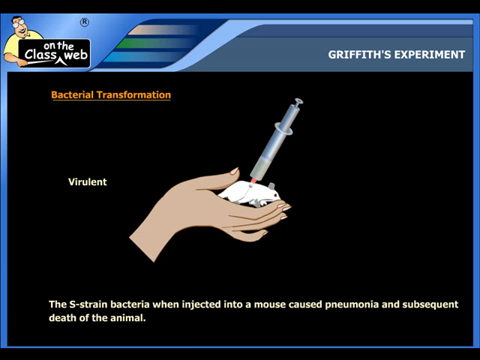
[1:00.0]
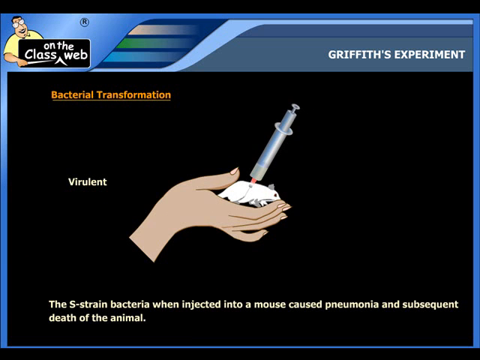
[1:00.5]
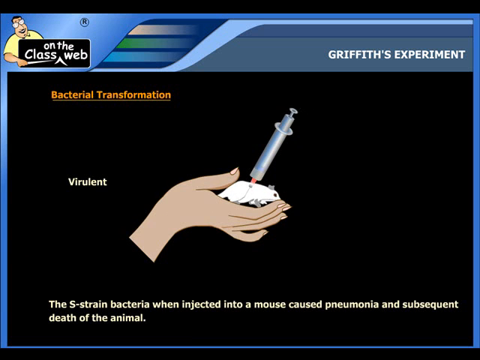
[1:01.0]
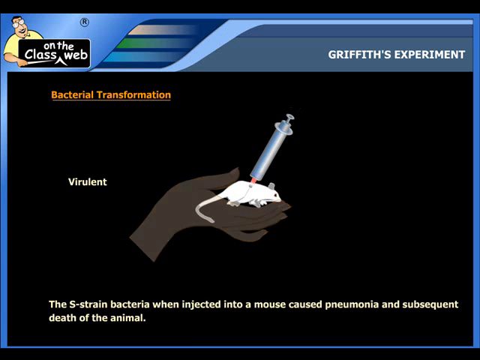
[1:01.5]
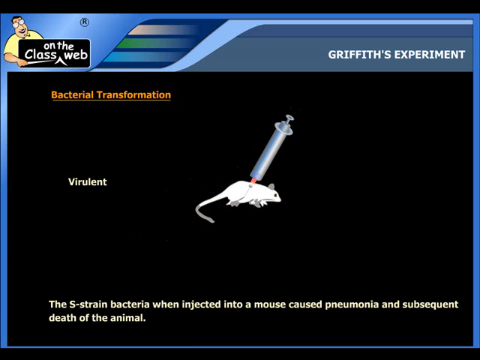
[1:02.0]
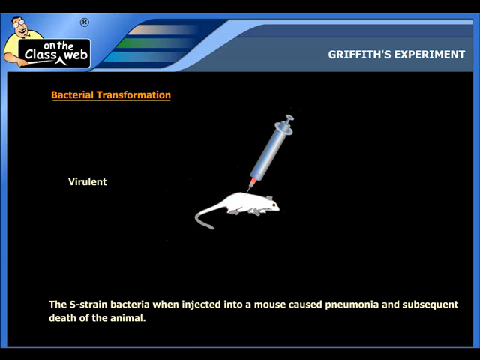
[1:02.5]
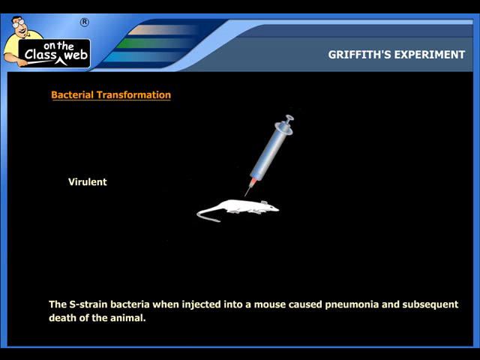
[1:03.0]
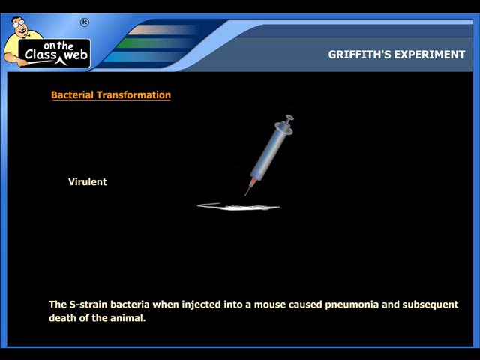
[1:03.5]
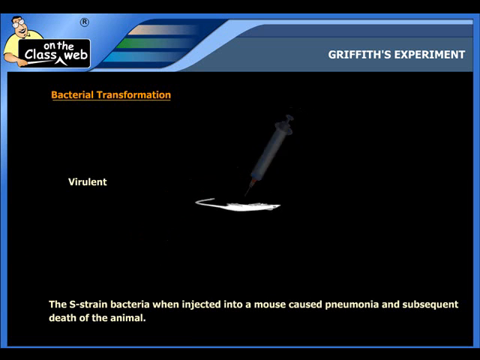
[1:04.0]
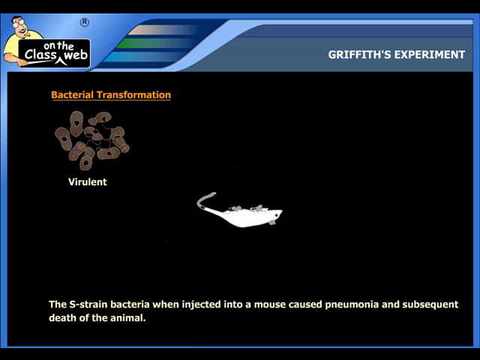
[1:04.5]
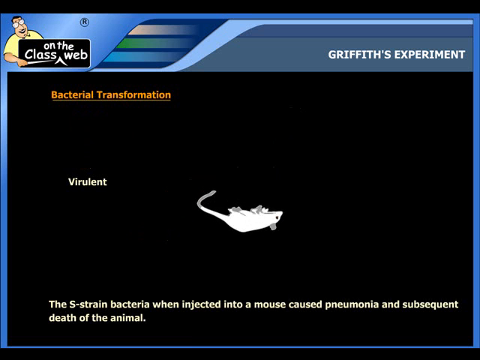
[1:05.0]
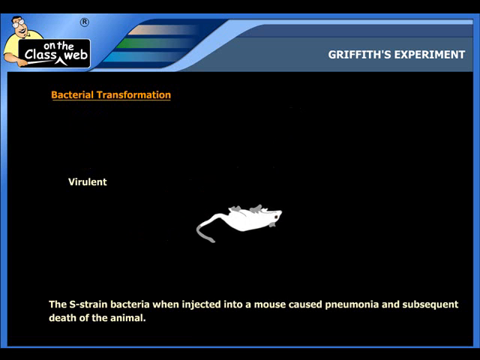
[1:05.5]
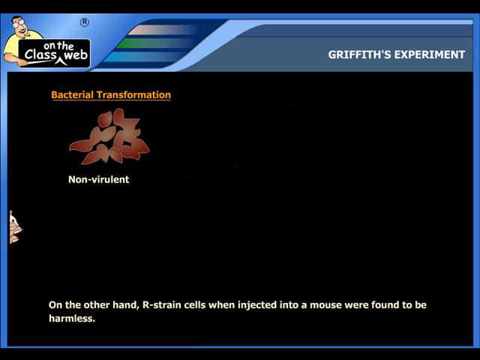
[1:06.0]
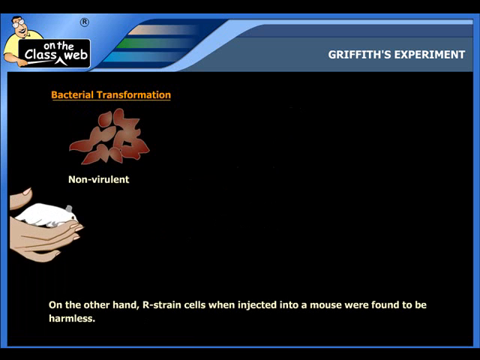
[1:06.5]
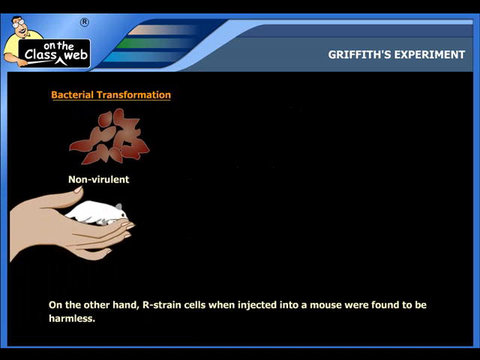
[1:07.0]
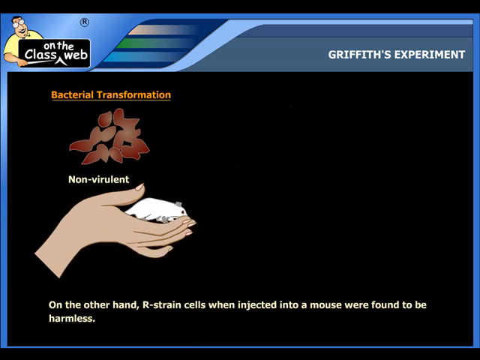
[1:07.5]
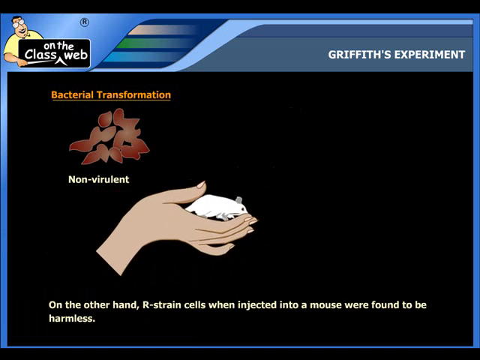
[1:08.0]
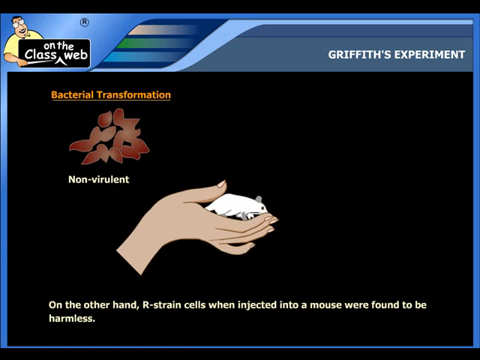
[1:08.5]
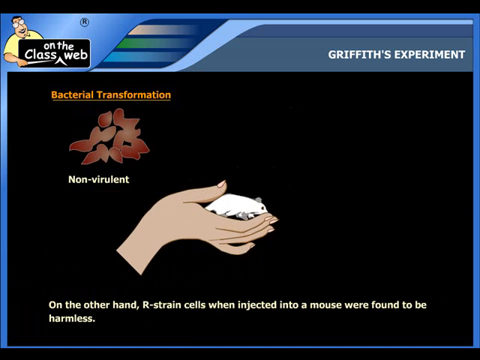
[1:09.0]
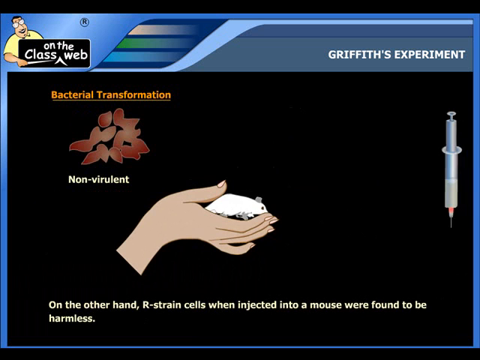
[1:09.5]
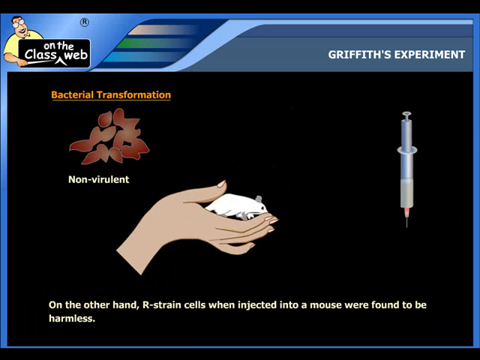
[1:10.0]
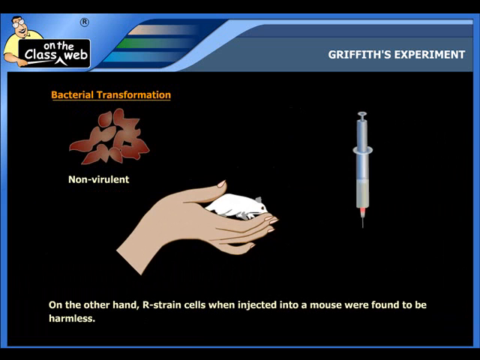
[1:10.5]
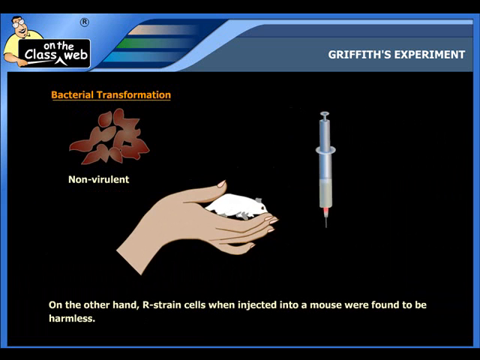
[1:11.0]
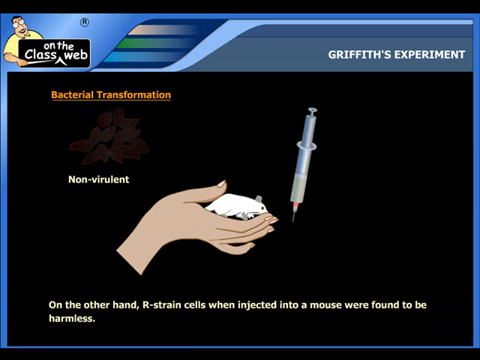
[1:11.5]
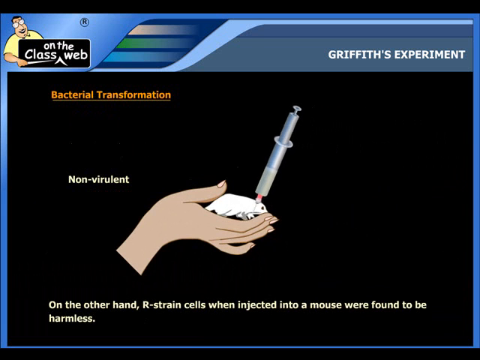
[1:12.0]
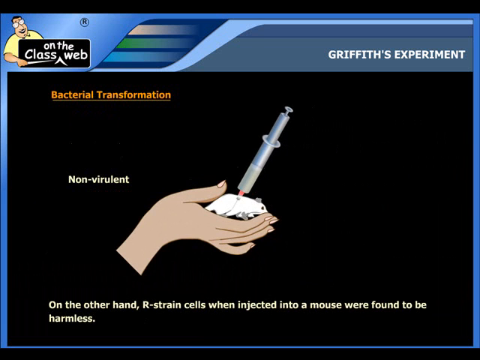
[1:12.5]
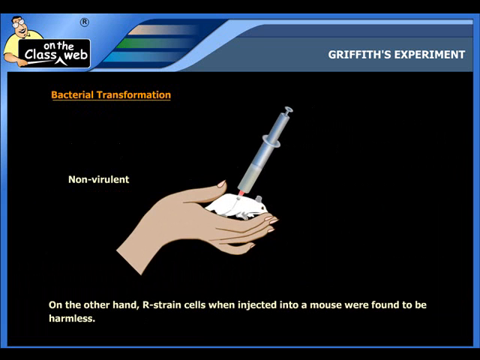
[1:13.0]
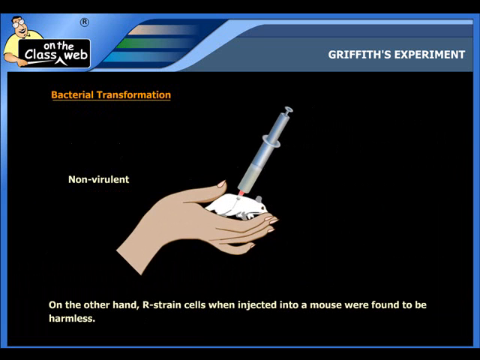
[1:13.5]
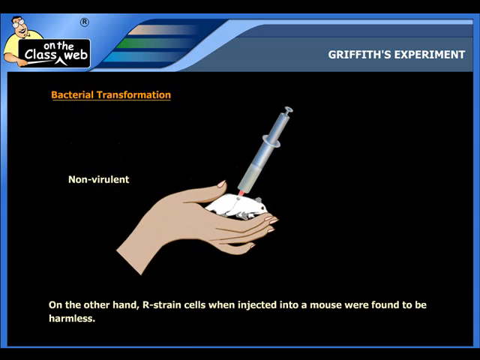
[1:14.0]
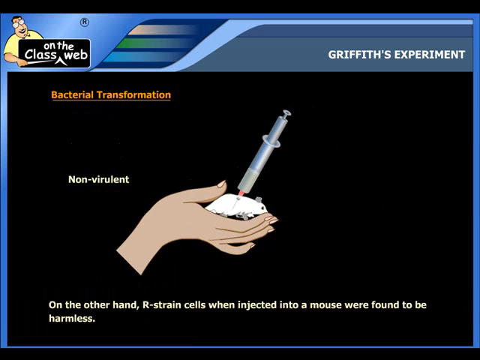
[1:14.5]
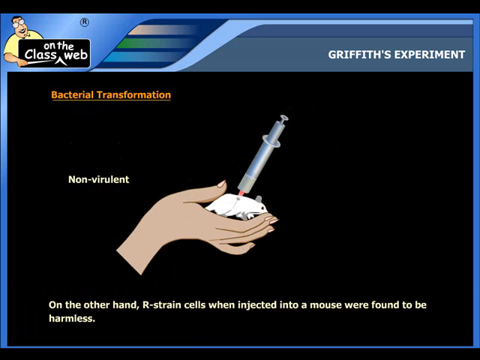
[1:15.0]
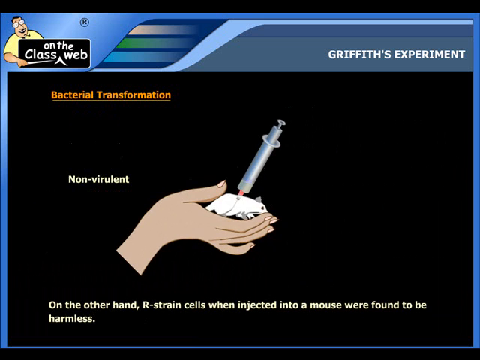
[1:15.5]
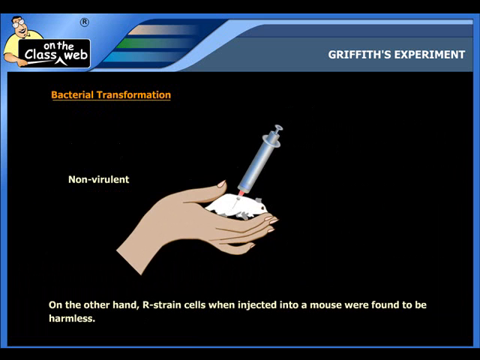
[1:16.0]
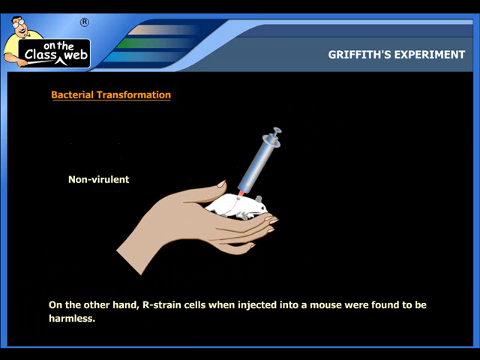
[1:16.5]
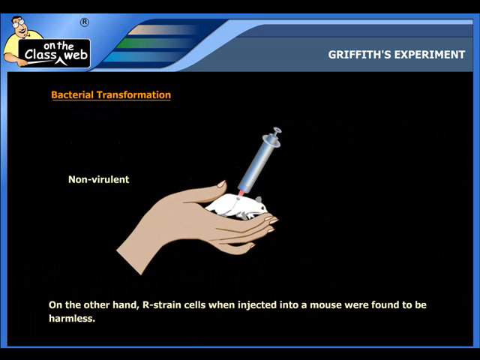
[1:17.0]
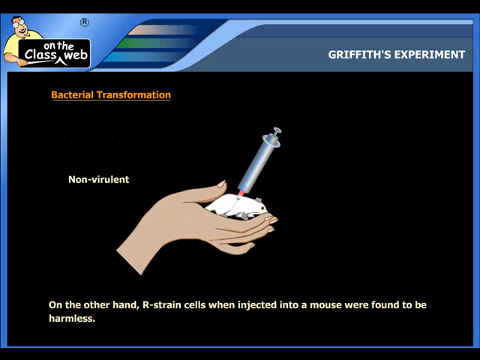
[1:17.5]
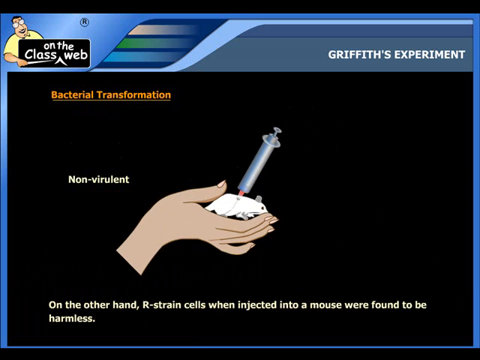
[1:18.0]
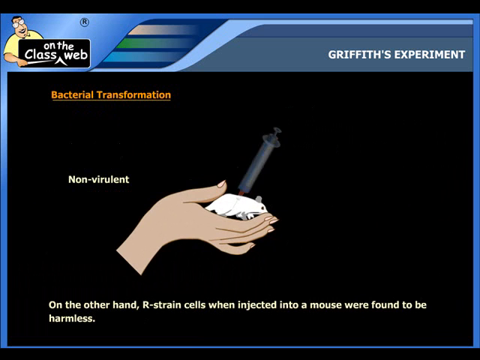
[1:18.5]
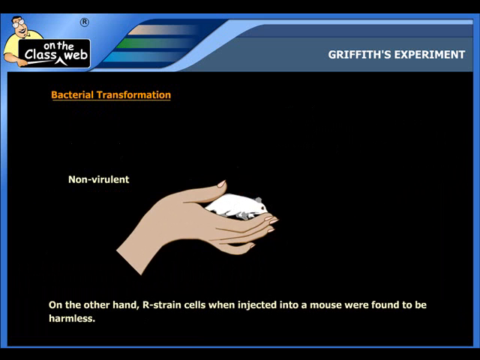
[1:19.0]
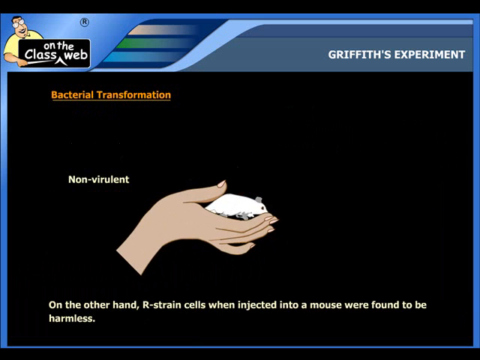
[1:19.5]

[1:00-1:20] In the upper left corner, a smiling little cartoon character with a yellow shirt, dark hair and glasses holds a pointer in his right hand; in front of him is a sign with a black background and white letters that says "on the class web." At the upper far right, white letters read "Griffith's Experiment." Below, on the black background, orange lettering says "Bacterial transformation." Underneath is a cartoon picture of a right hand, a white lab mouse, and a syringe in the back of the lab mouse. To the left of it is the word "virulent." Text at the bottom reads: "the S-strain bacteria when injected into a mouse caused pneumonia and subsequent death of the animal."